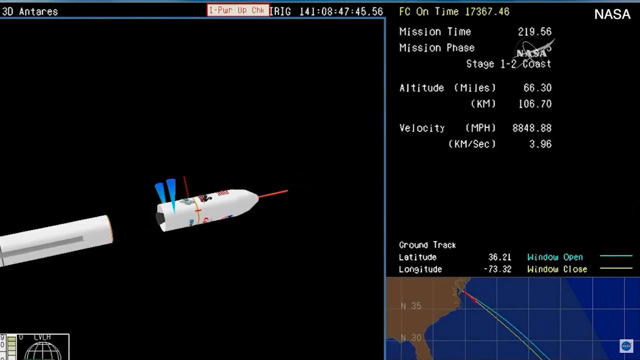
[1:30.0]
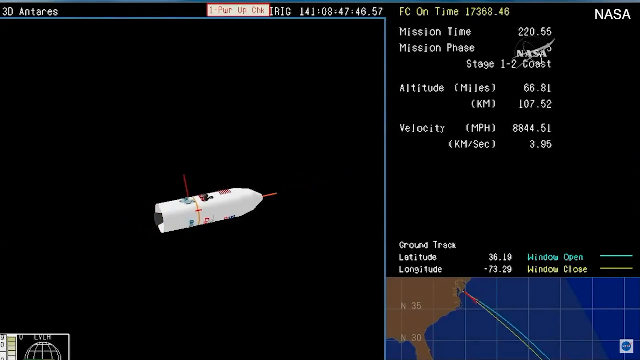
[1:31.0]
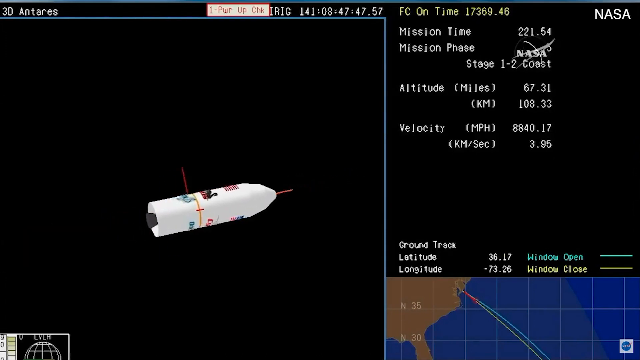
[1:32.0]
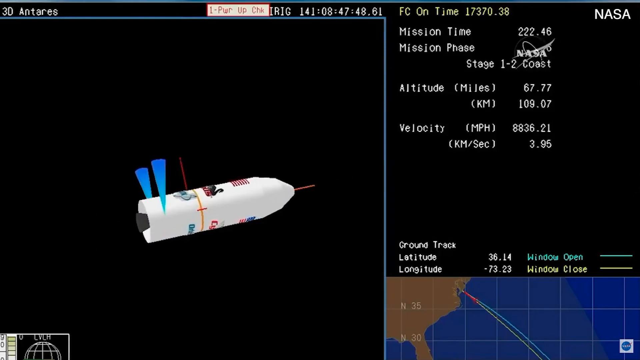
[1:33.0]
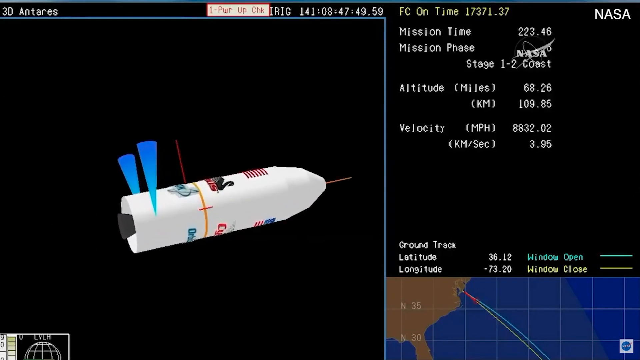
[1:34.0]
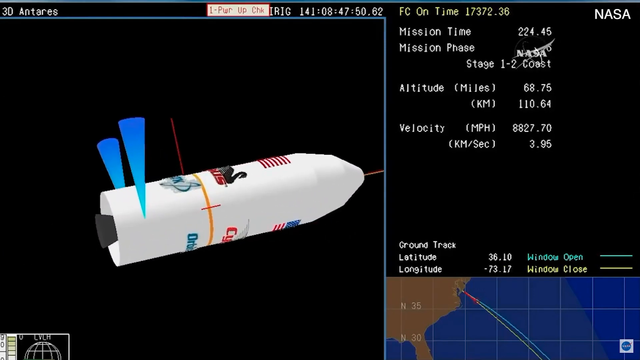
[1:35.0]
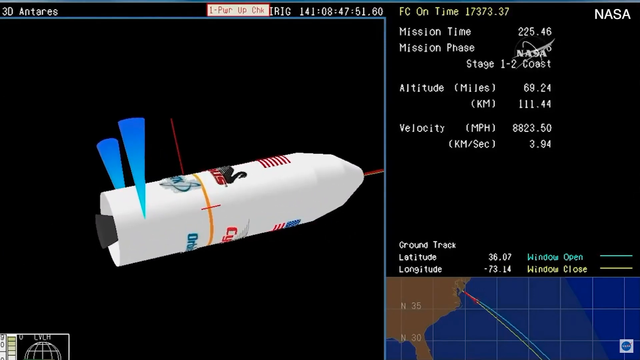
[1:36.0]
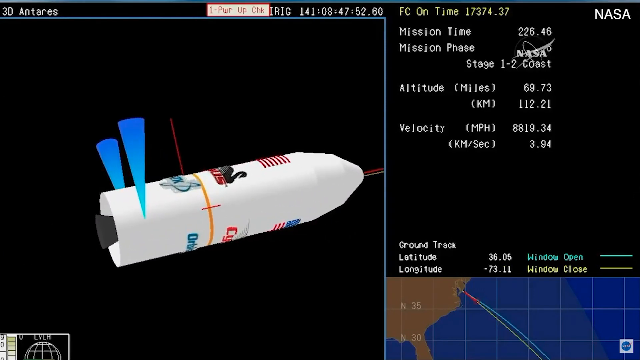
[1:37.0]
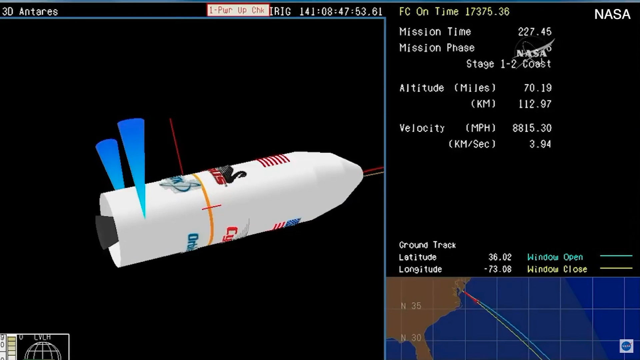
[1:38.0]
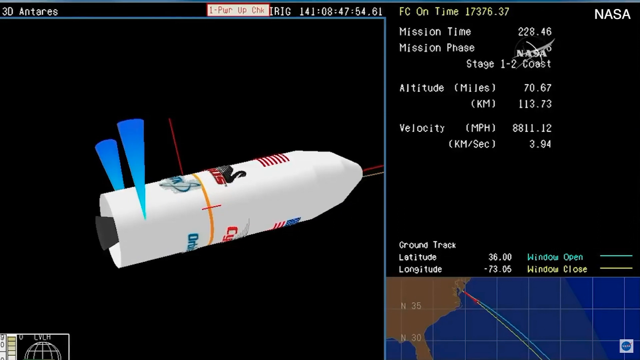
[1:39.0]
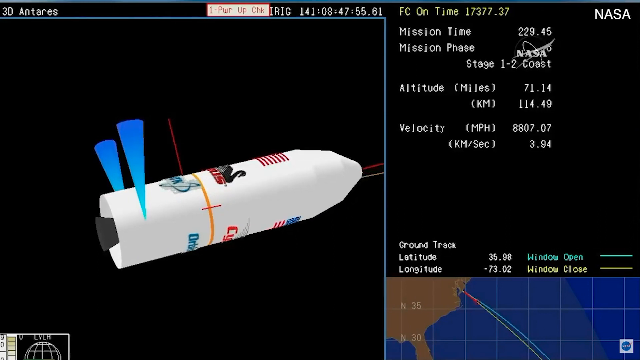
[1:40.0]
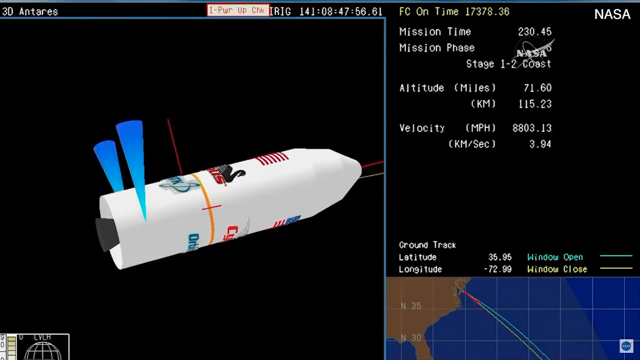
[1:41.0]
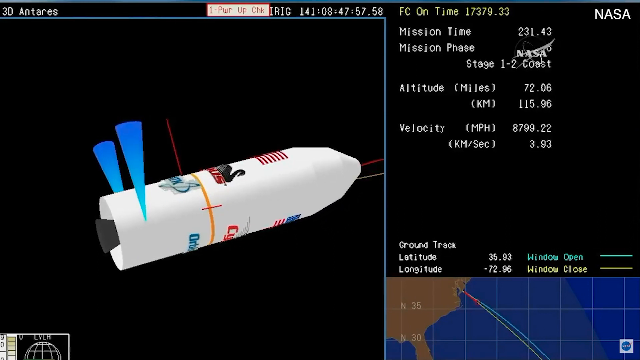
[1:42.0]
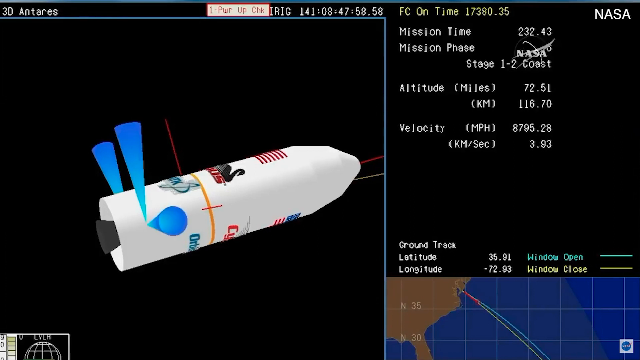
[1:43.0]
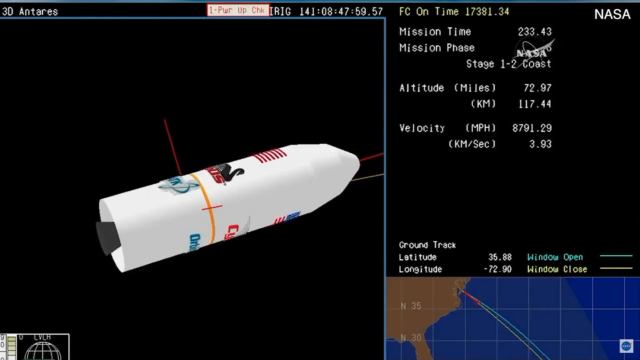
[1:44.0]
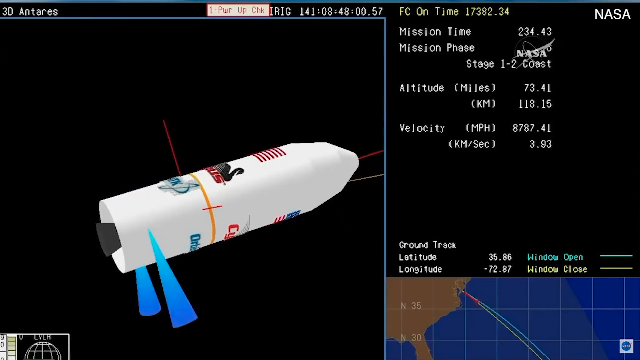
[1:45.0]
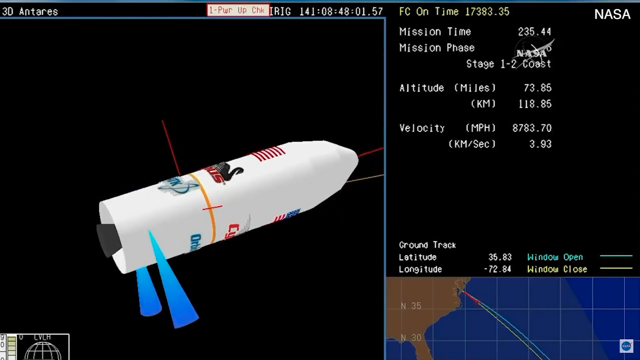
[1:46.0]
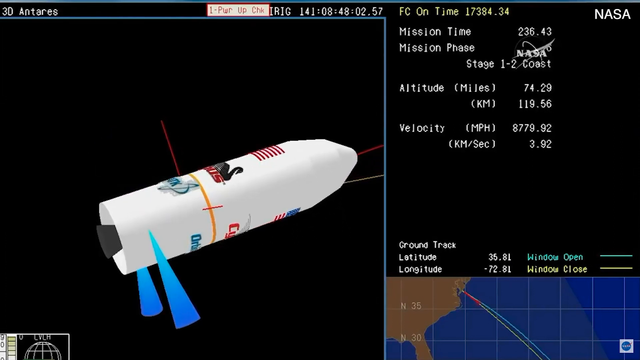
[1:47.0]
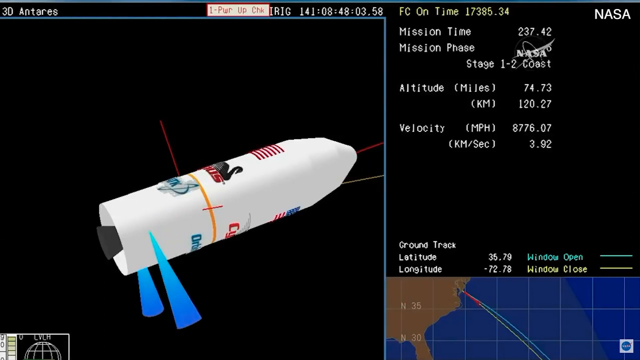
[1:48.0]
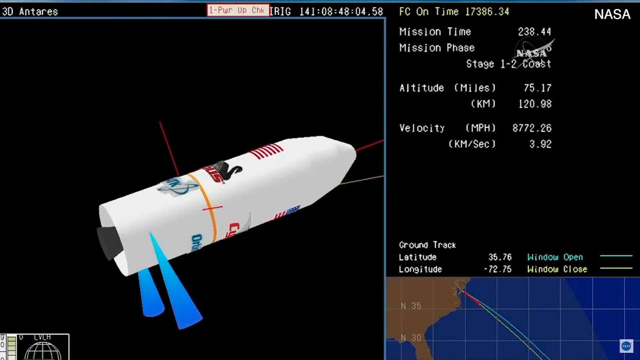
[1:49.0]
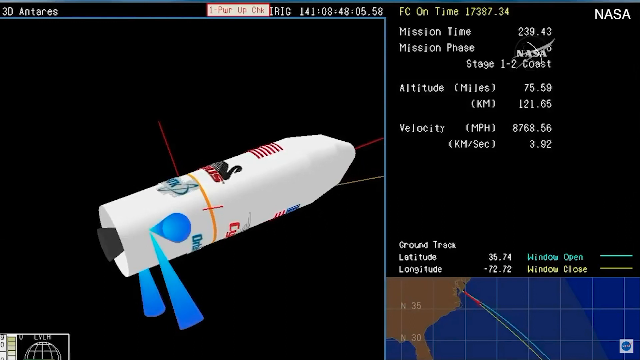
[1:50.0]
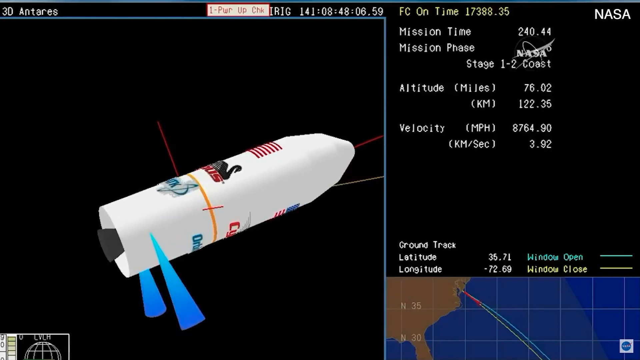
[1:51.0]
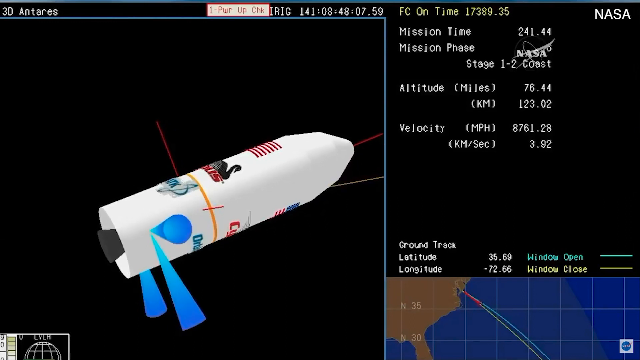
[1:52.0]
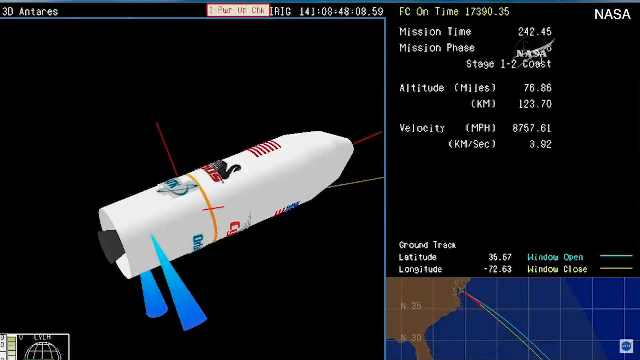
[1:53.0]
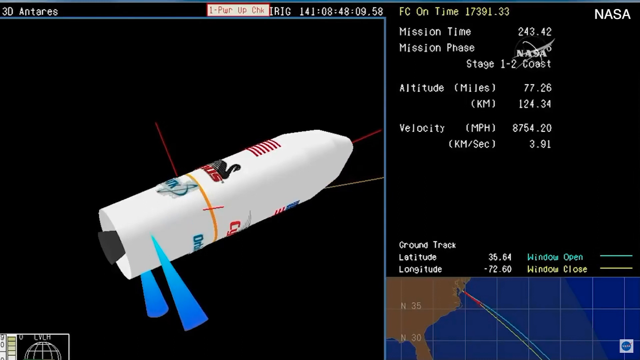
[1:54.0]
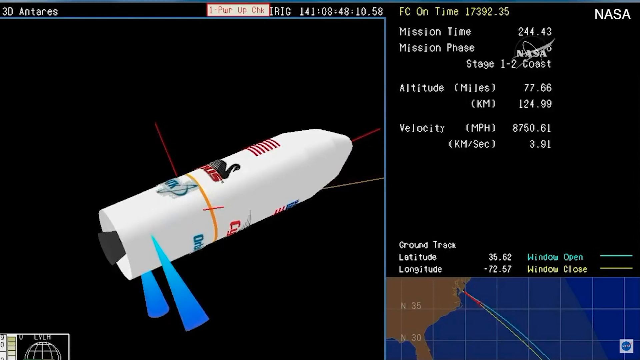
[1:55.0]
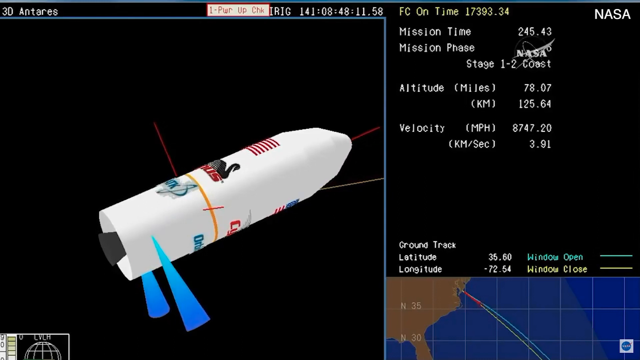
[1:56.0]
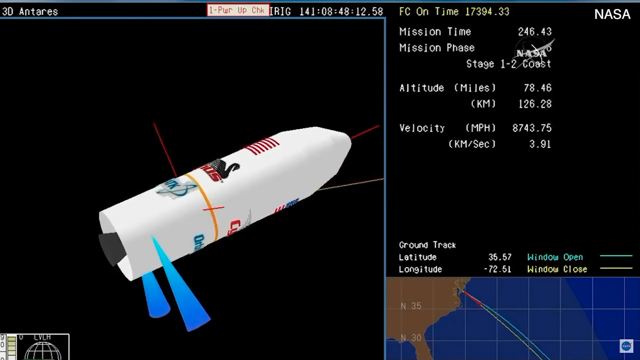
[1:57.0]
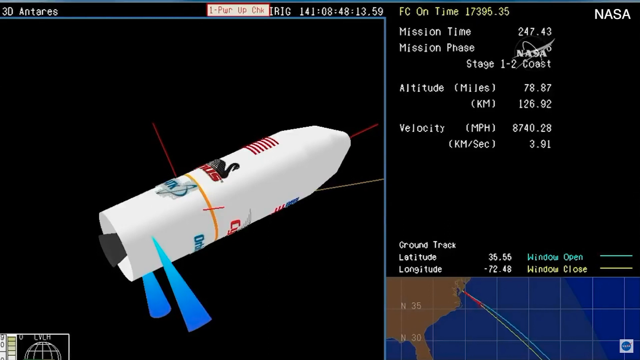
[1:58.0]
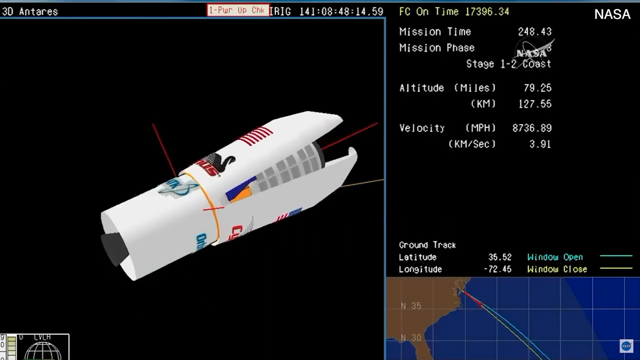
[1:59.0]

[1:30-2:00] On the right-hand side of the screen, readings for mission time, mission phase, altitude and velocity of the rocket are shown. The tip of the rocket moves through the air, and blue cones appear.